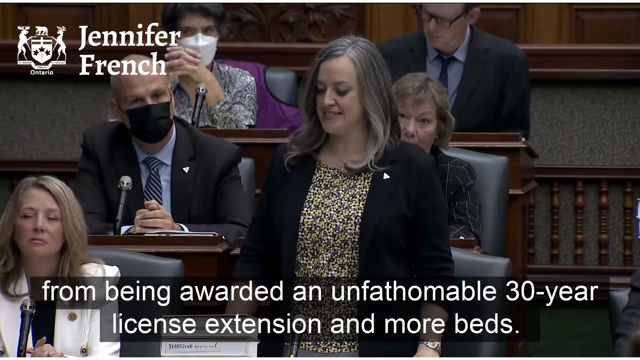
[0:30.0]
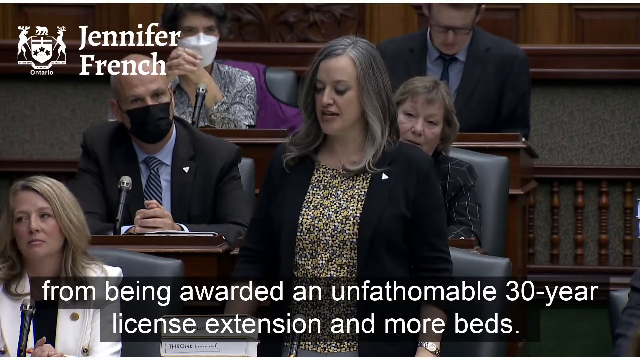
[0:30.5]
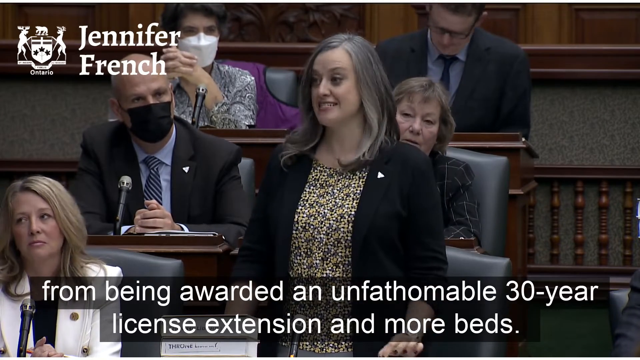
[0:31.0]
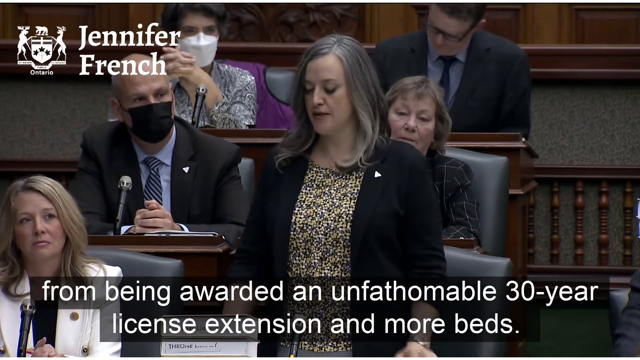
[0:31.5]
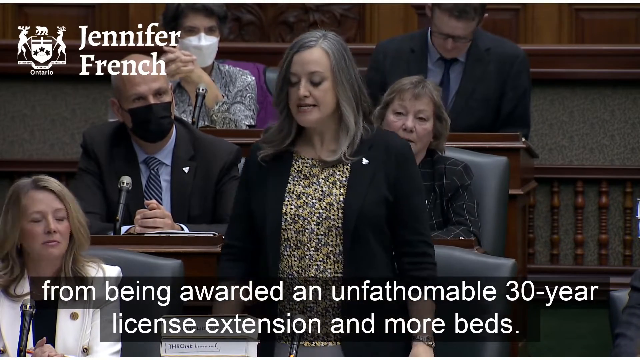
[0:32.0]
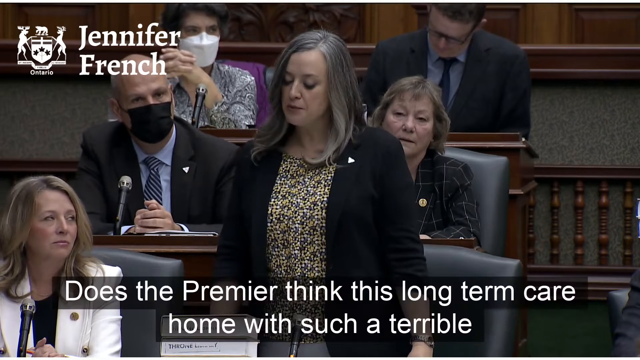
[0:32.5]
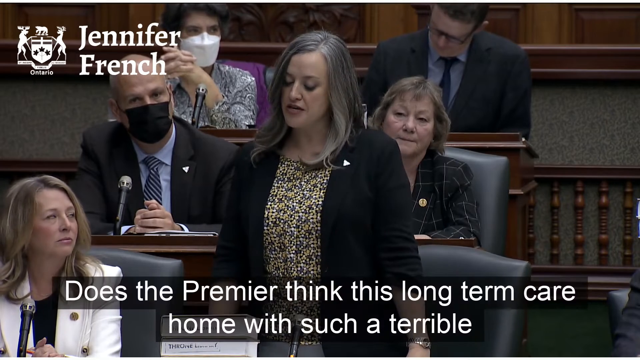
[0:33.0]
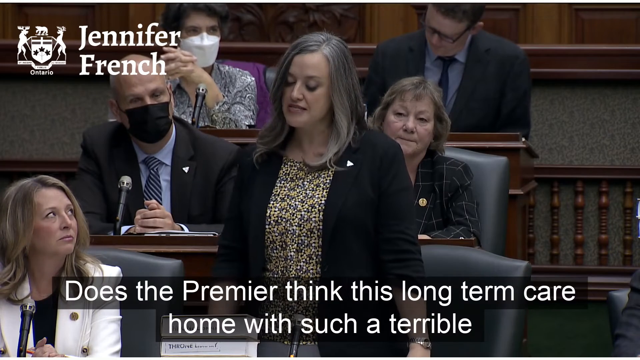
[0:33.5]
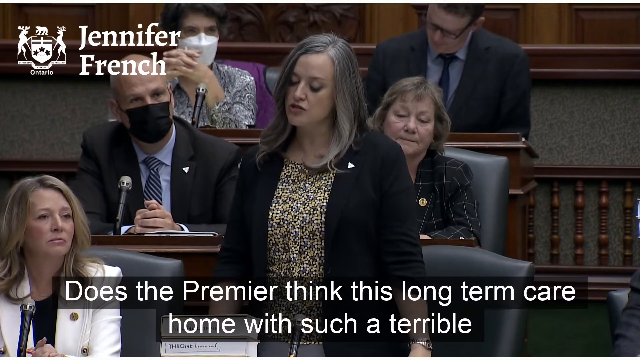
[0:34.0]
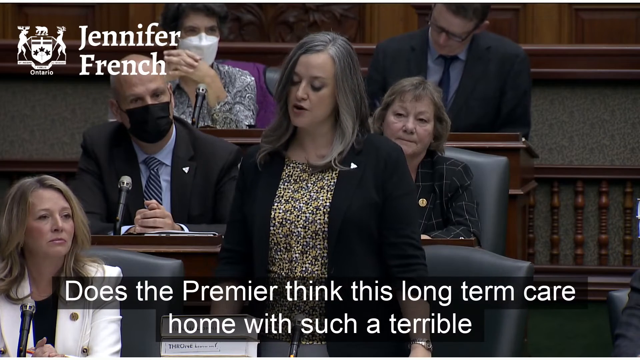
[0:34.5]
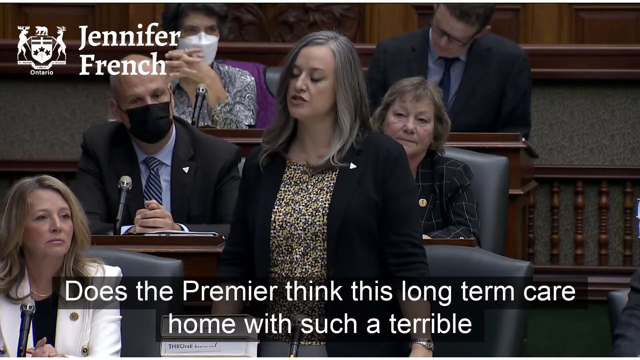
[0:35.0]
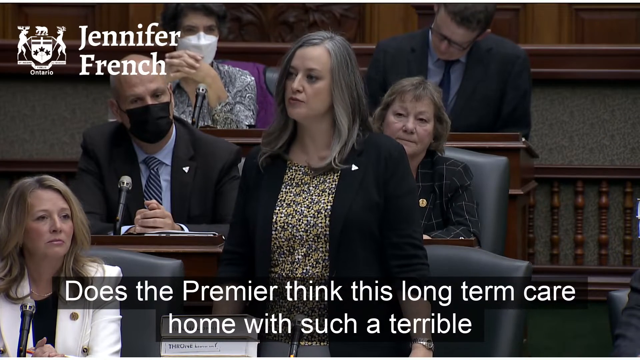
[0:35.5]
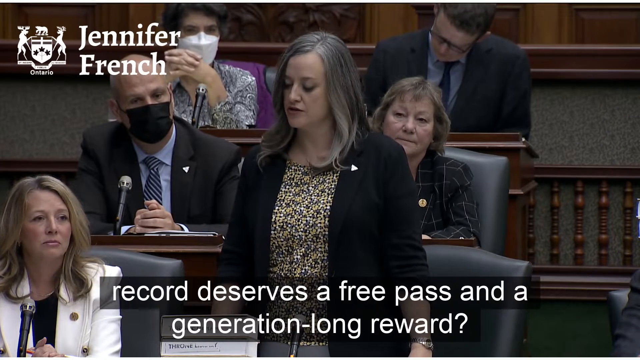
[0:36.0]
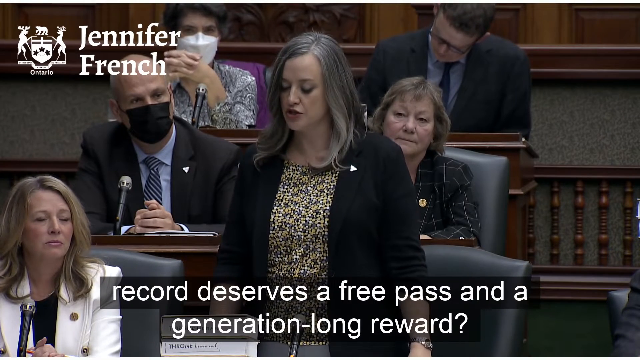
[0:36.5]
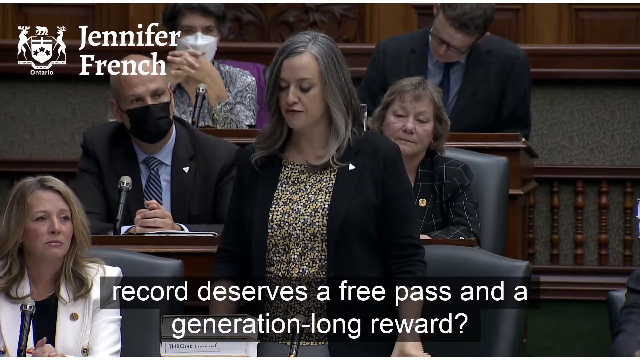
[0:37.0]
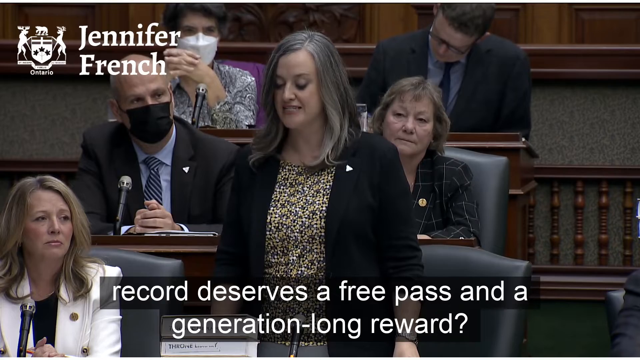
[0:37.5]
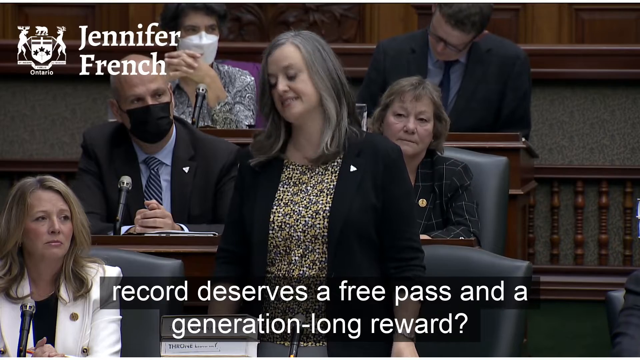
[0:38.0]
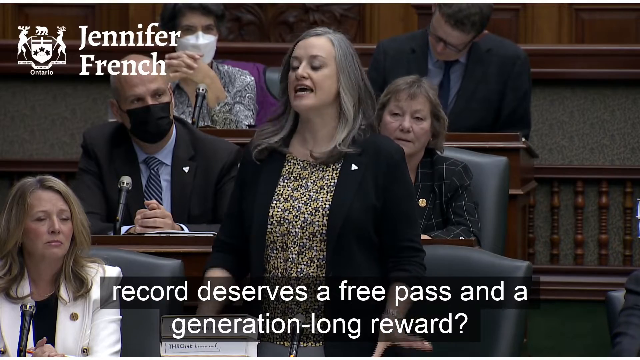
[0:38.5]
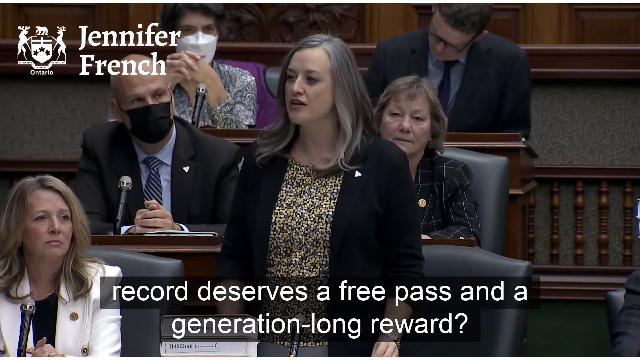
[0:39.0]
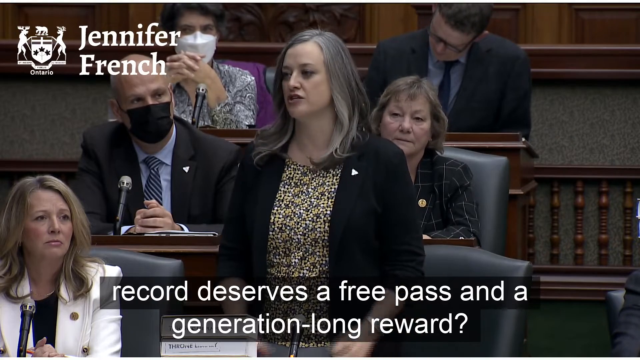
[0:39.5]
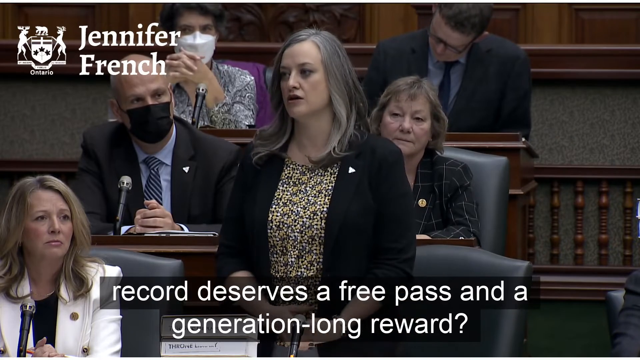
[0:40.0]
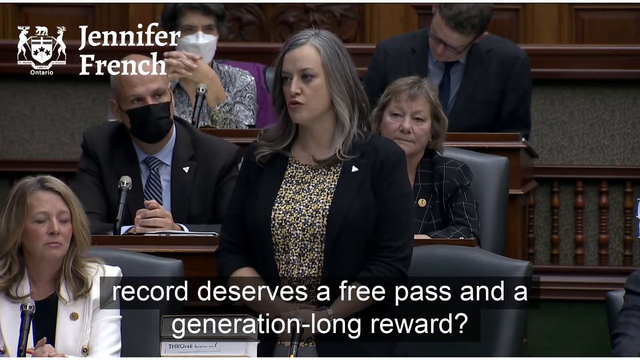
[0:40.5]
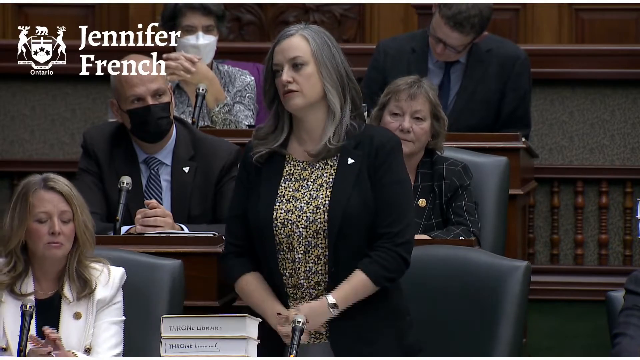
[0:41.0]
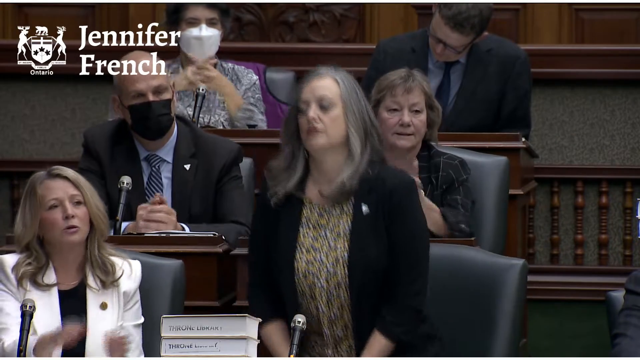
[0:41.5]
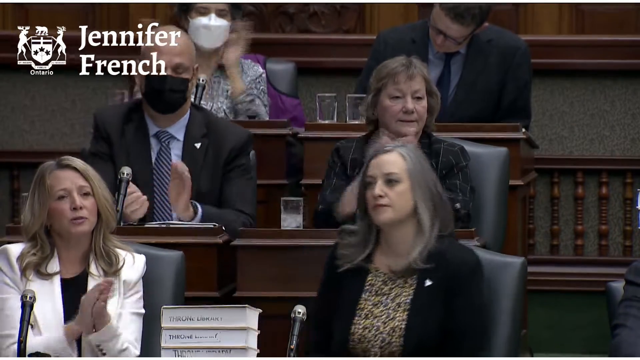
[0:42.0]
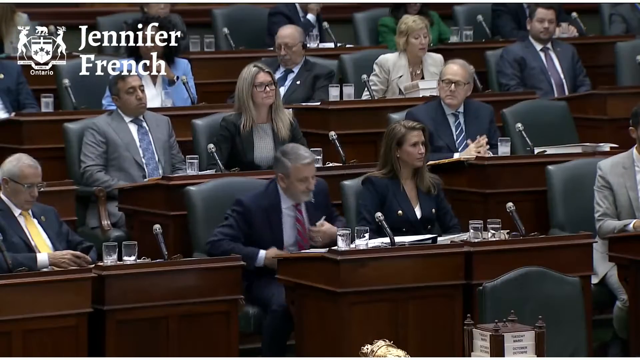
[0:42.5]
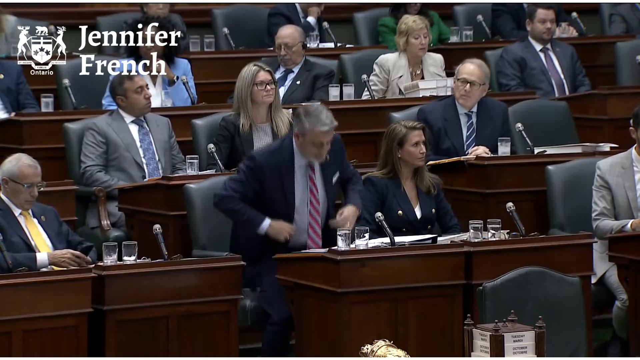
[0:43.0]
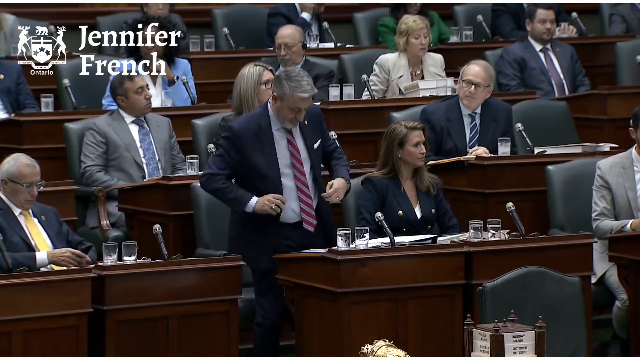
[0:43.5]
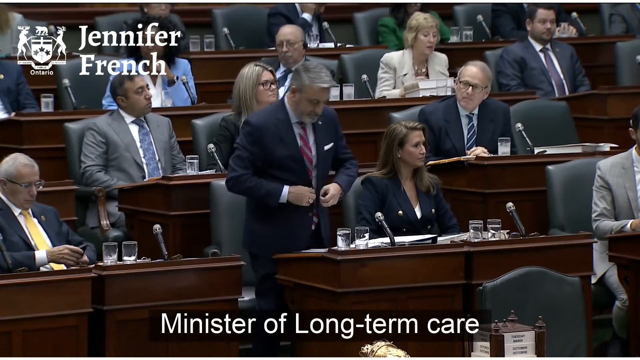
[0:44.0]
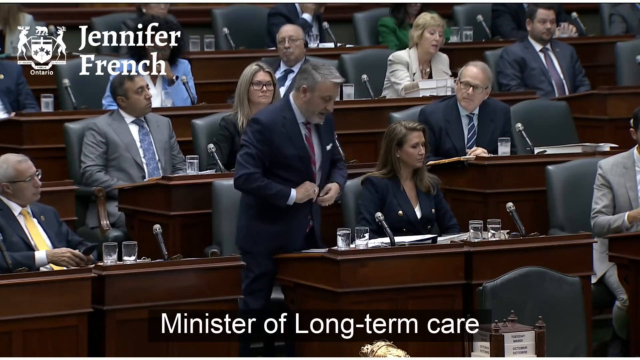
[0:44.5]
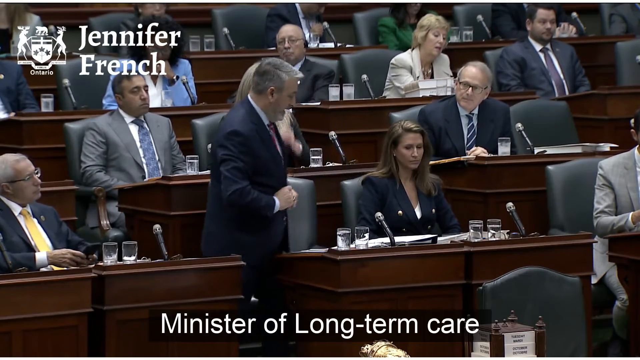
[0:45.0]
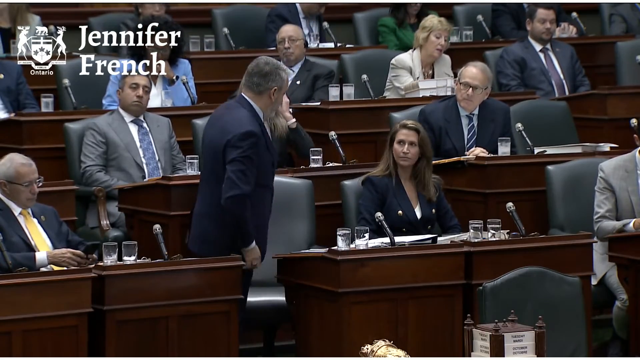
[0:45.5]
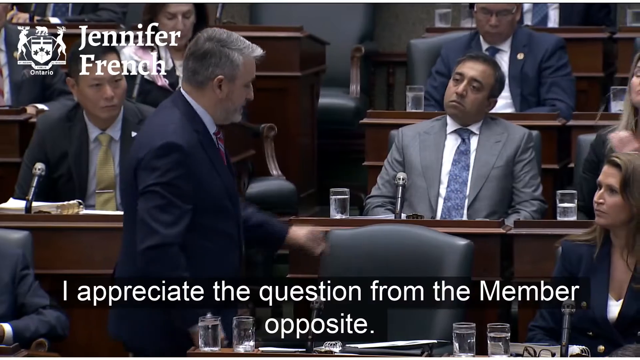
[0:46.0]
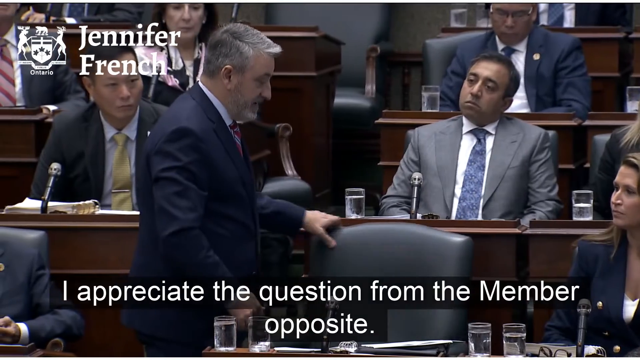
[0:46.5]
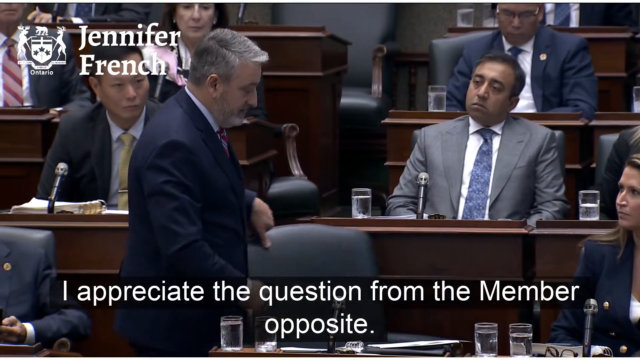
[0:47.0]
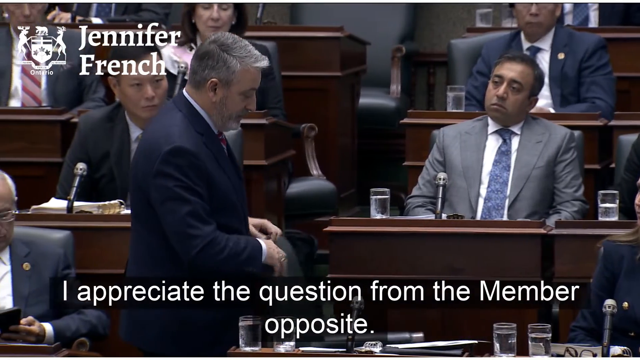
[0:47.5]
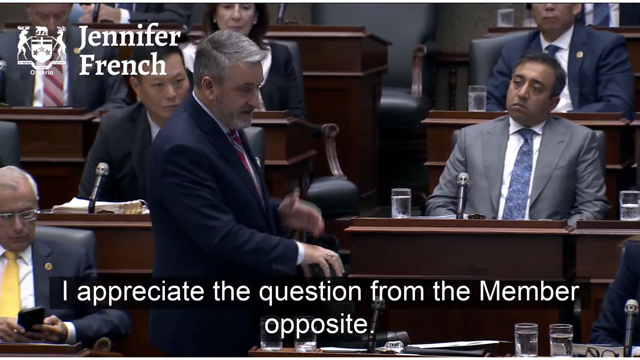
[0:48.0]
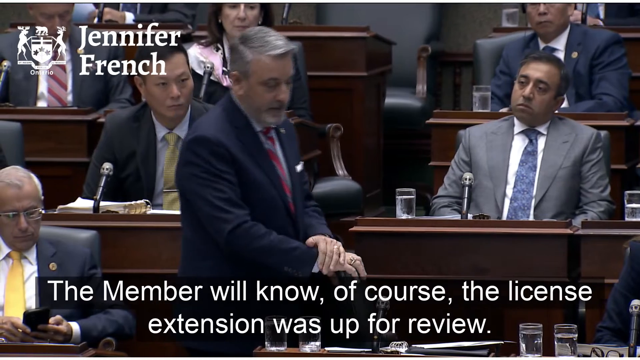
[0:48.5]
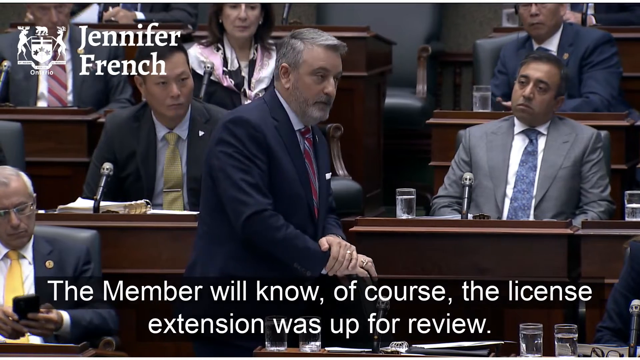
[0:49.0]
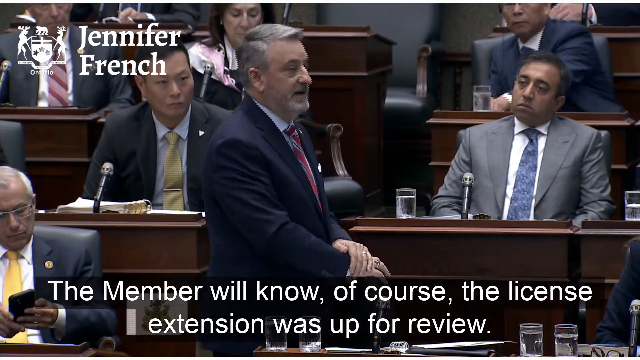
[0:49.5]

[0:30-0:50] The woman in the flowered top and black jacket, with long gray hair, stands behind her desk, still speaking. She continues: "does the premier think this long-term care home with such a terrible record deserves a free pass and a generation-long reward?" She moves as she talks, expressing her passion for the statement, and then takes a seat. The camera angle changes to another part of the meeting, where a man with short gray hair, a light blue button-down shirt, a navy sports business jacket and a red striped tie stands. He buttons his jacket and moves to push his chair in, and a text box at the bottom reads "I appreciate the questions from the member opposite." He turns his chair and leans against the back of it. The text box then reads "the member will know of course the license extension was up for review."